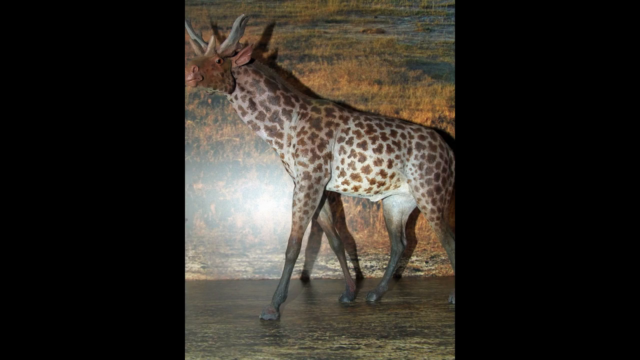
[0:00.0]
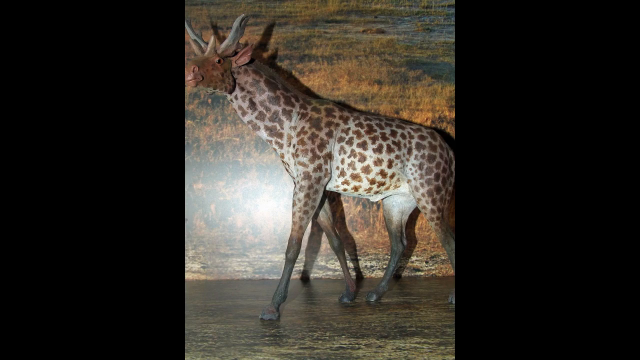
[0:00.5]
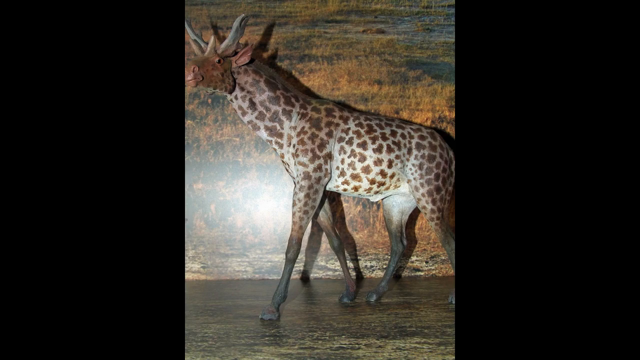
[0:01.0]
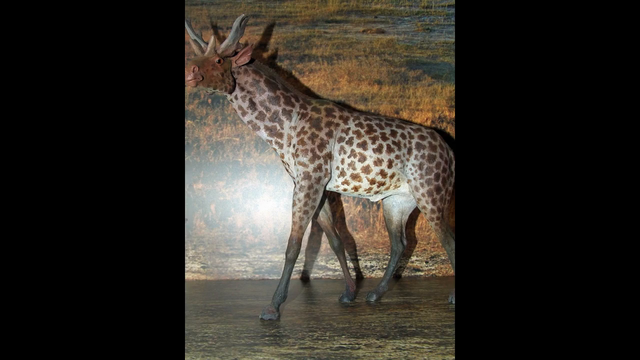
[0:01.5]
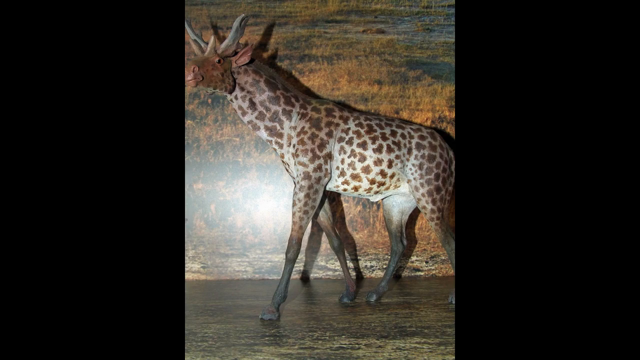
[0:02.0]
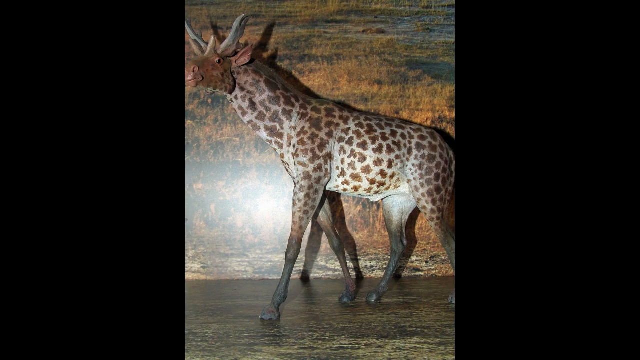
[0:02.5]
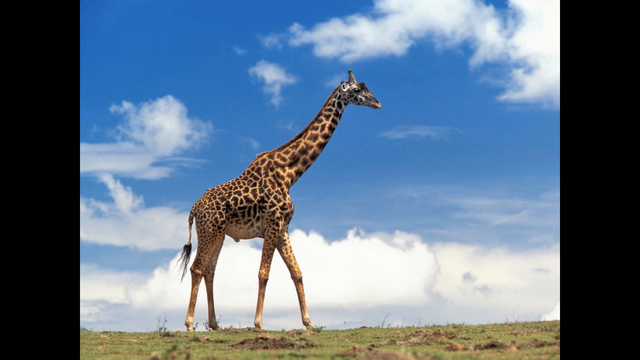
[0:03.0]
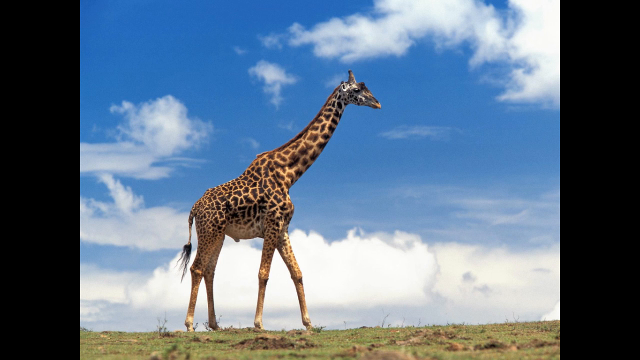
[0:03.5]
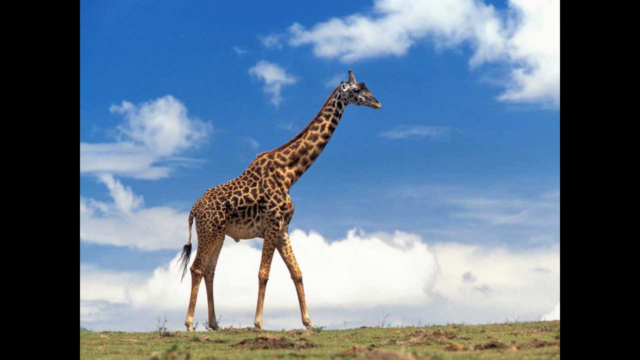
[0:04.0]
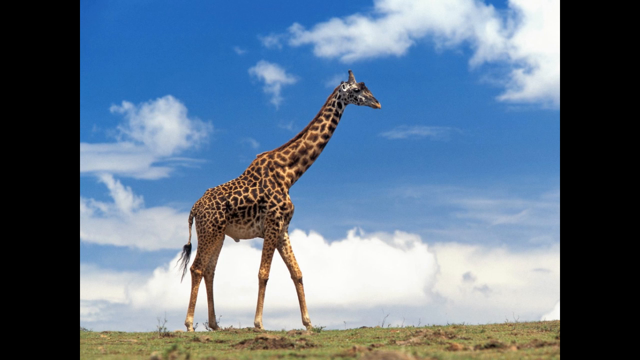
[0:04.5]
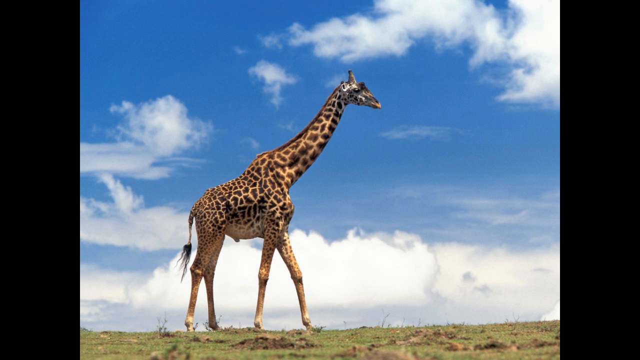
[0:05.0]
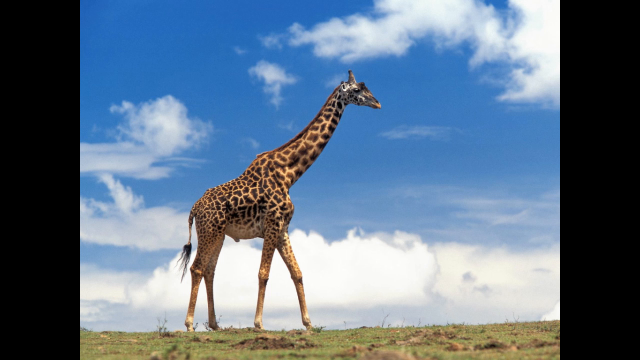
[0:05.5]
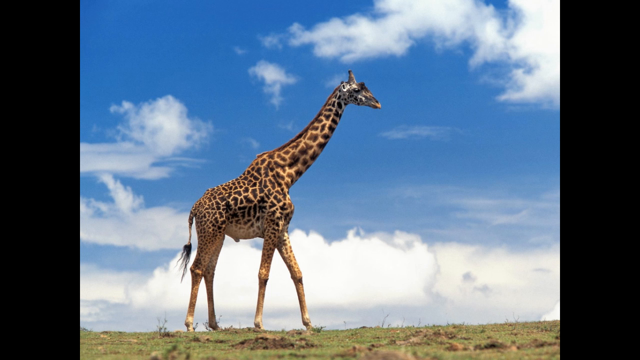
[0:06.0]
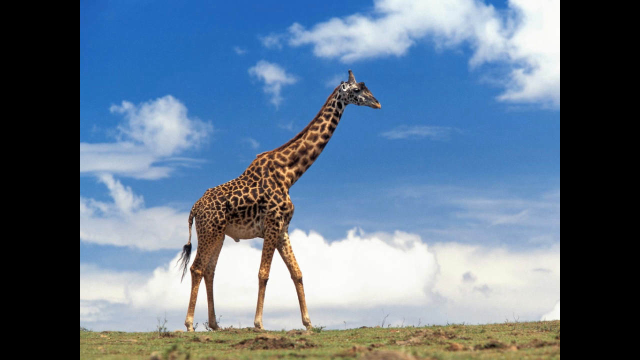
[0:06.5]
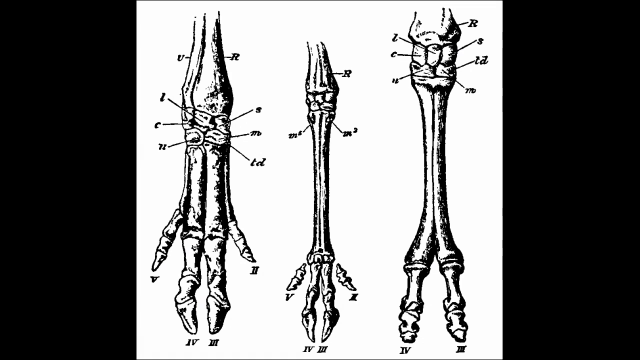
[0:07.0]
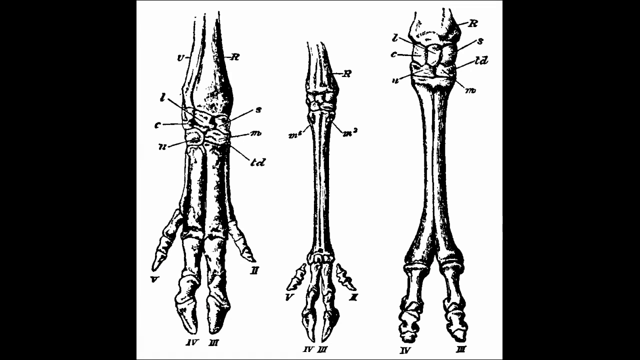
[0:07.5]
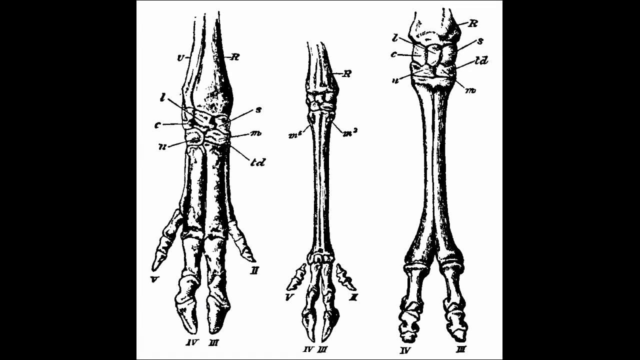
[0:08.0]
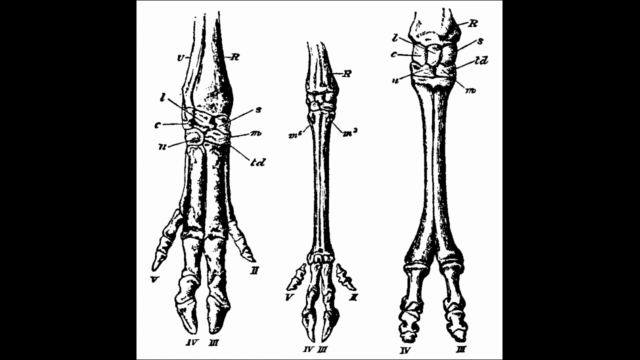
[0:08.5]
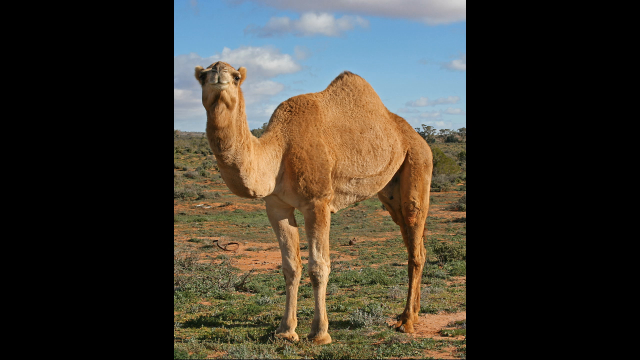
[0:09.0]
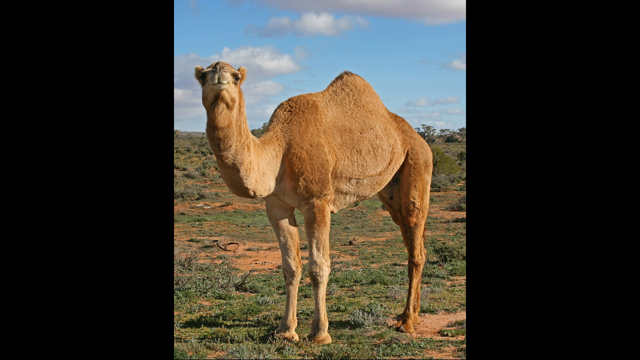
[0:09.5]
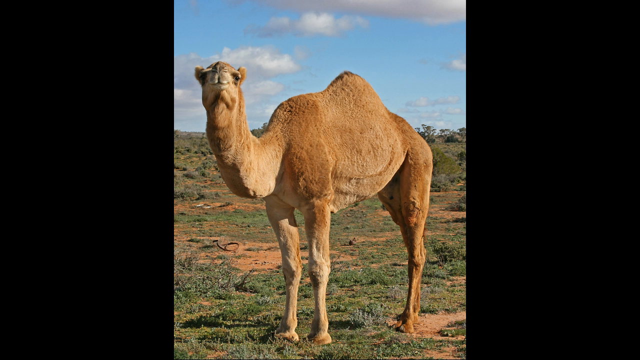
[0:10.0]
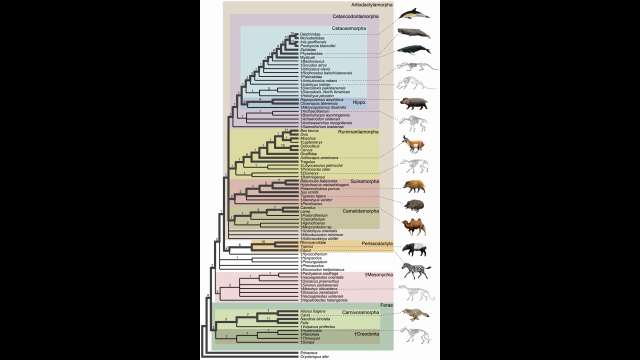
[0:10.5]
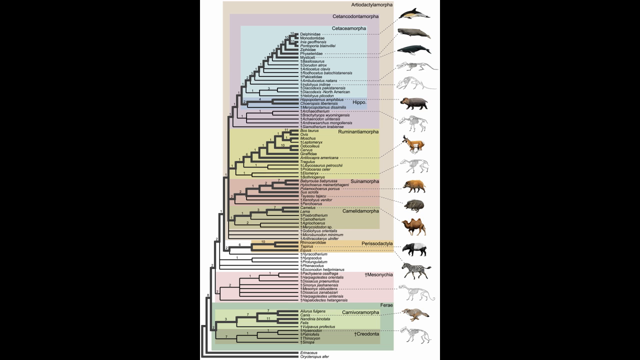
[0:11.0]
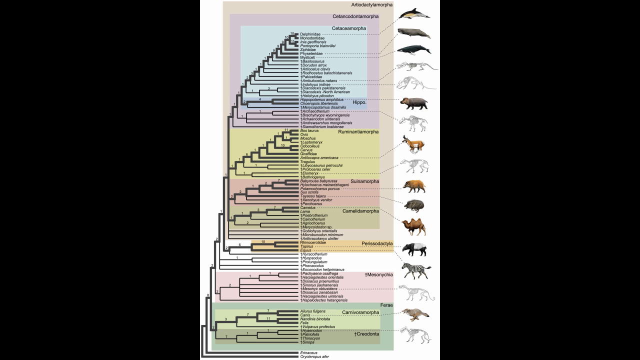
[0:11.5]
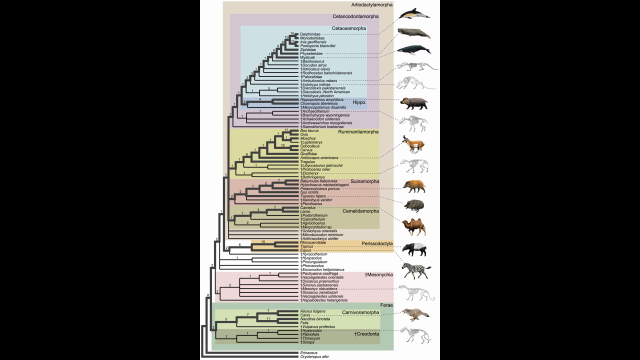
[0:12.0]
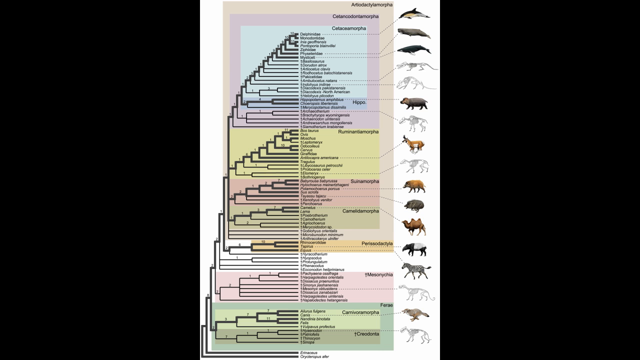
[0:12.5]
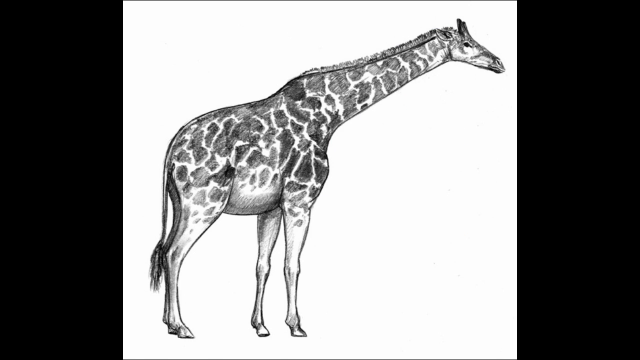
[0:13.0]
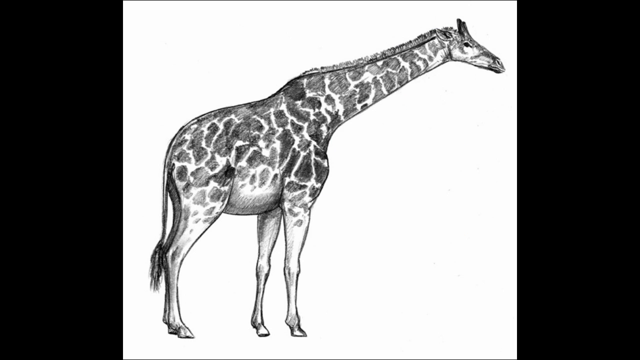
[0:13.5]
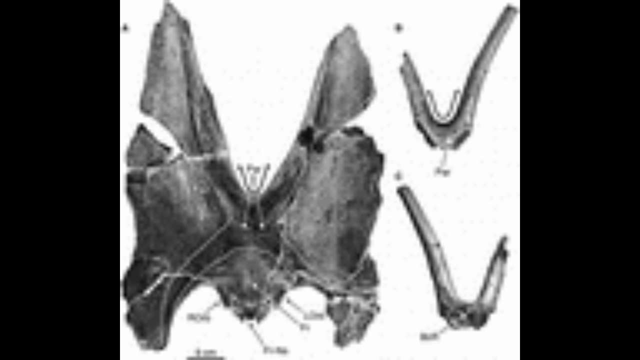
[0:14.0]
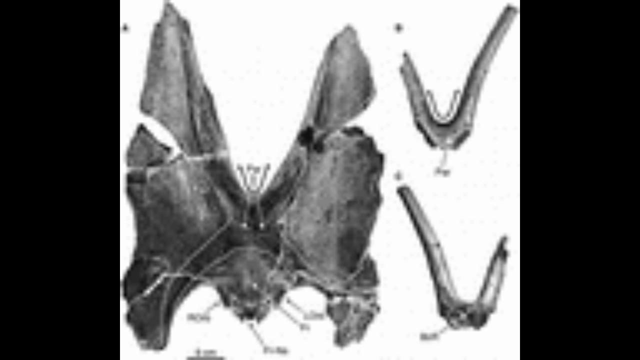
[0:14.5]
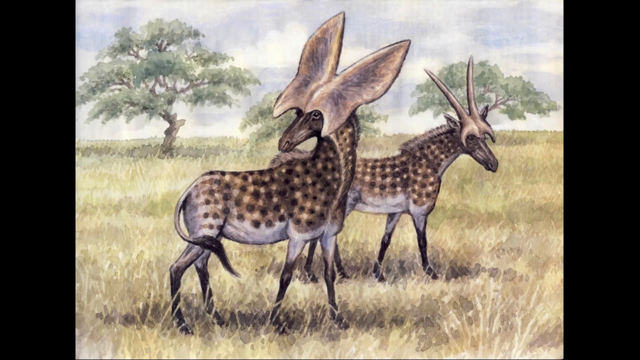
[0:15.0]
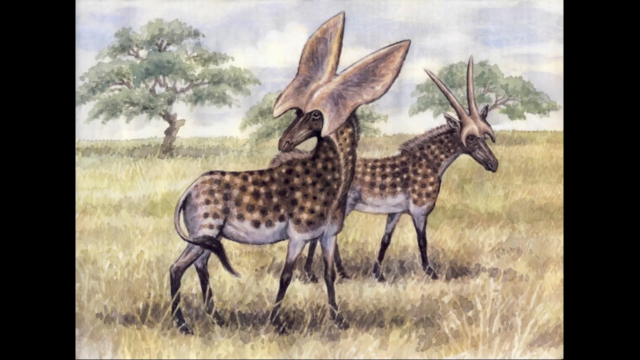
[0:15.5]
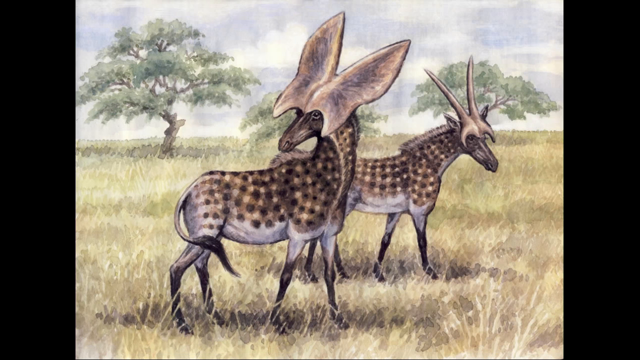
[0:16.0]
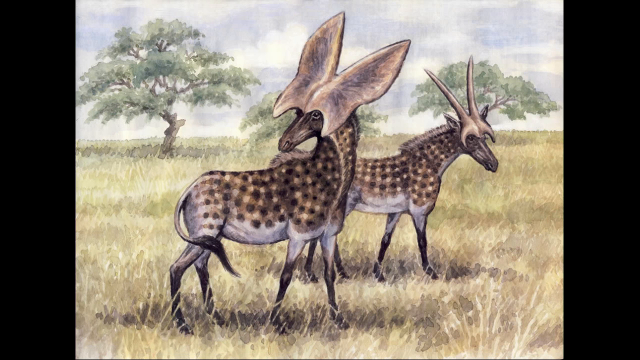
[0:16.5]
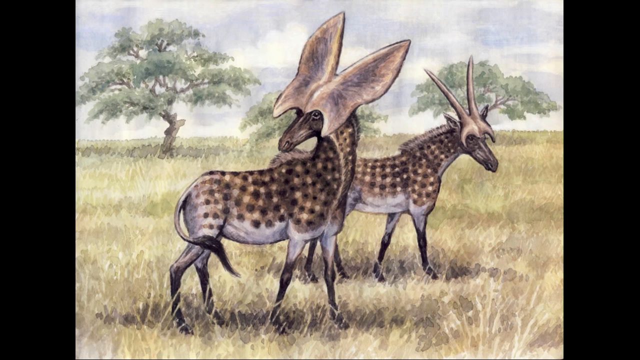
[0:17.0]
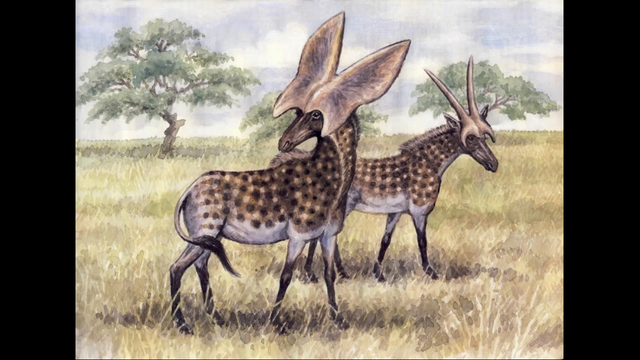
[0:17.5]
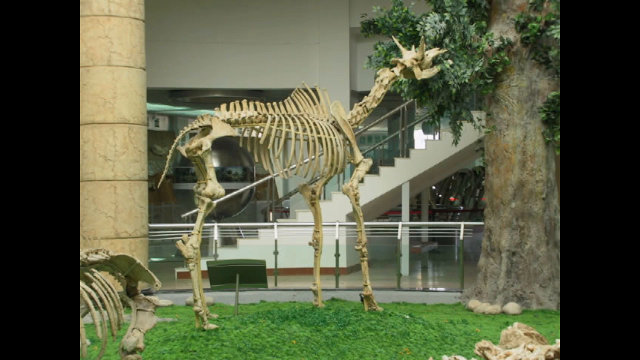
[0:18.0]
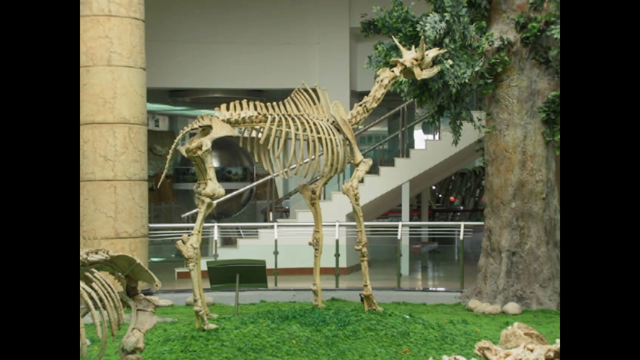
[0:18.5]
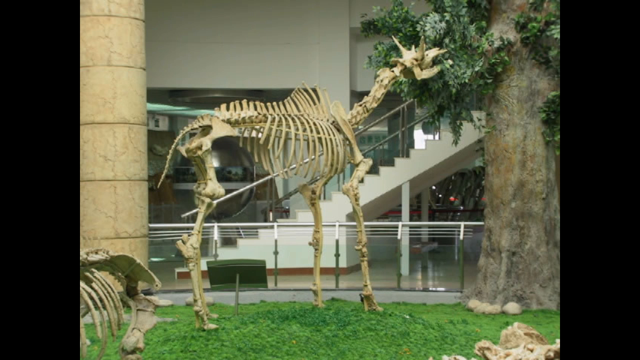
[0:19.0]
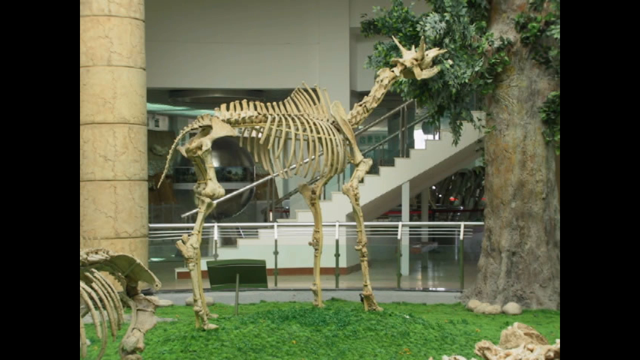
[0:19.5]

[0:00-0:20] The video opens on what looks like a museum piece of an ancient giraffe. It looks stuffed and very short, has the common giraffe spots, and faces to the left; the picture appears to be taken inside a museum. A modern-day giraffe follows, seen in profile walking eastward across a plain. It is yellow with brown spots, and it is daytime, with a blue sky and white clouds. Next comes what looks like a diagram of a giraffe's feet and legs, with three points on each side of the joints, apparently around the kneecap area. A camel appears briefly, followed by a graph with about 10 or 15 animals along the right side, made up of rows and rows of animal names and types. A drawing of a giraffe comes next, then what looks like a pelvic bone of a giraffe or of another animal. Another drawing shows an ancient animal that looks somewhat like a wildebeest but has large butterfly-shaped horns, and then the bones of one of these animals are shown inside a museum.